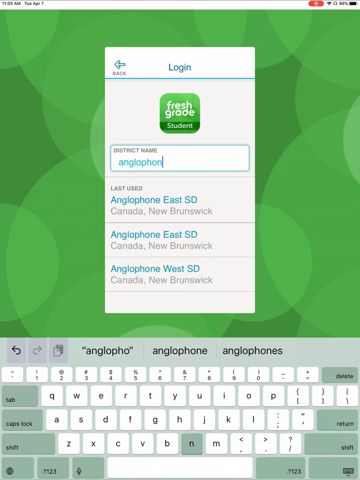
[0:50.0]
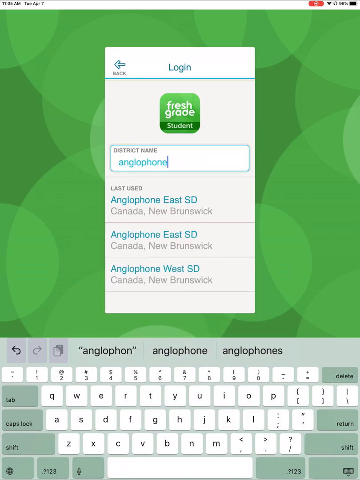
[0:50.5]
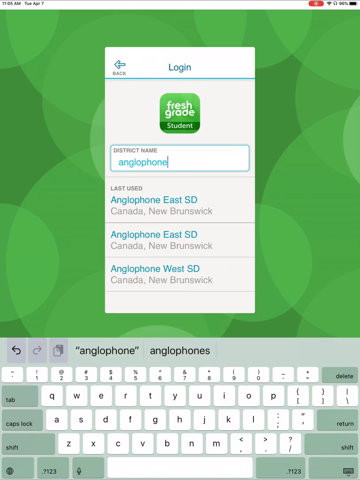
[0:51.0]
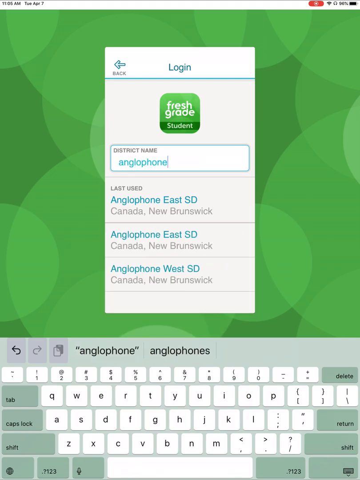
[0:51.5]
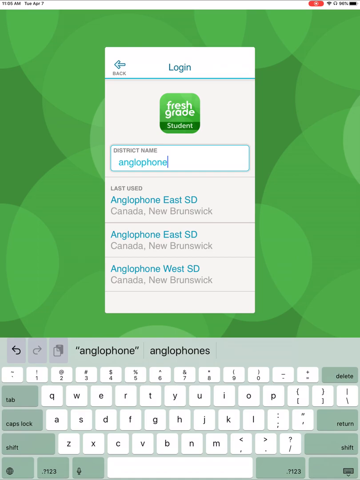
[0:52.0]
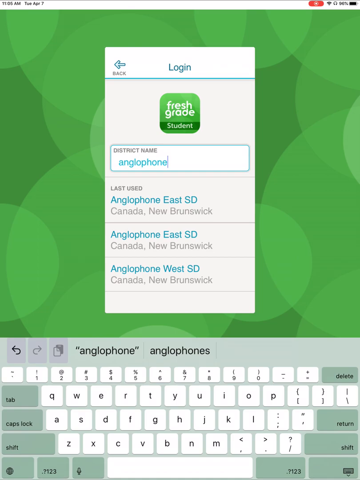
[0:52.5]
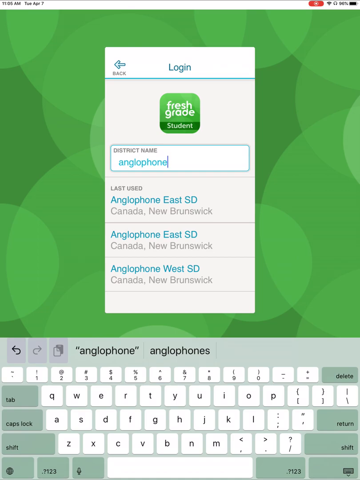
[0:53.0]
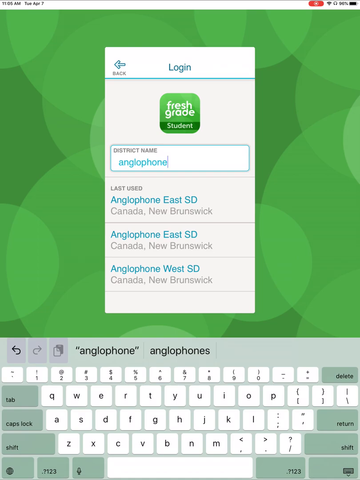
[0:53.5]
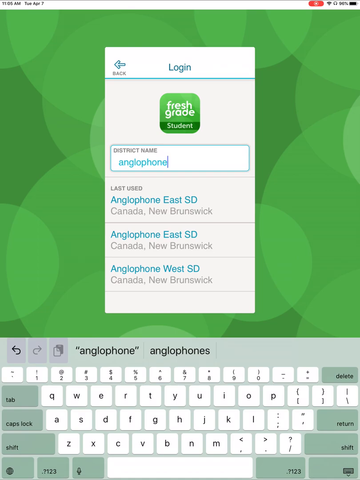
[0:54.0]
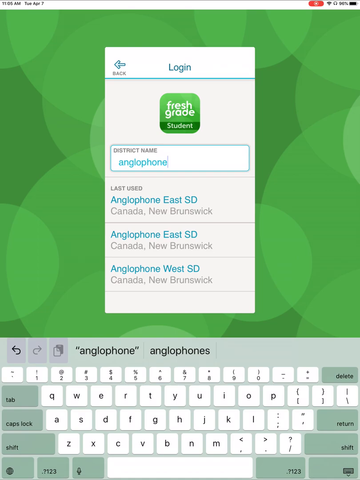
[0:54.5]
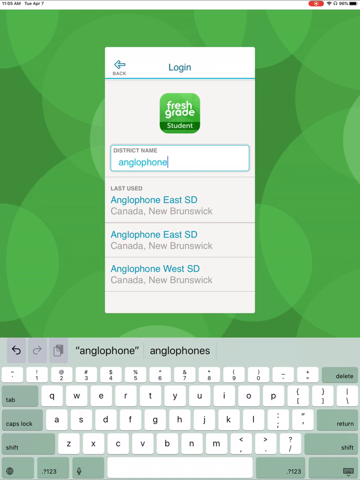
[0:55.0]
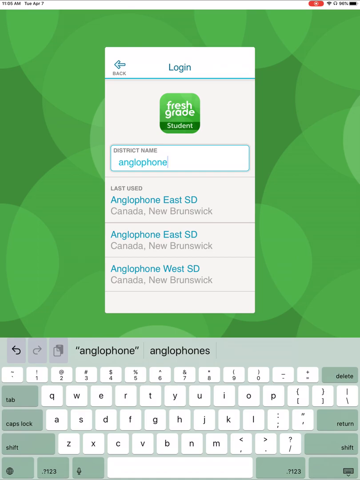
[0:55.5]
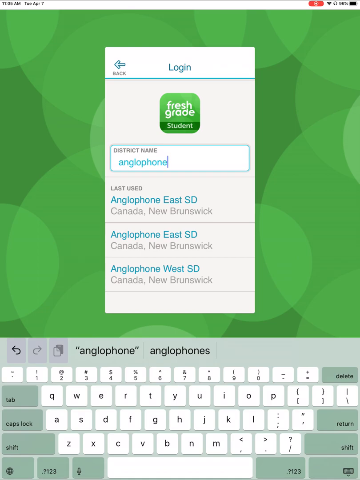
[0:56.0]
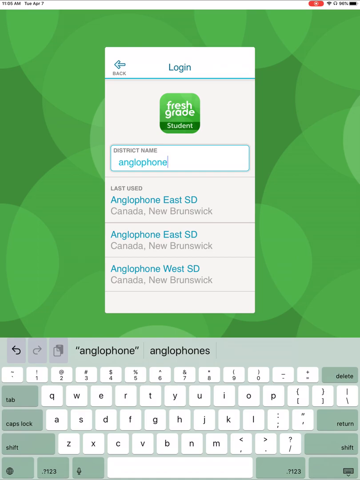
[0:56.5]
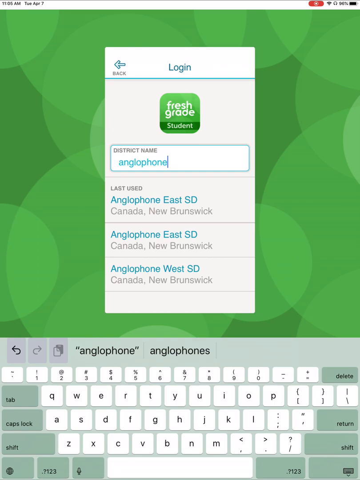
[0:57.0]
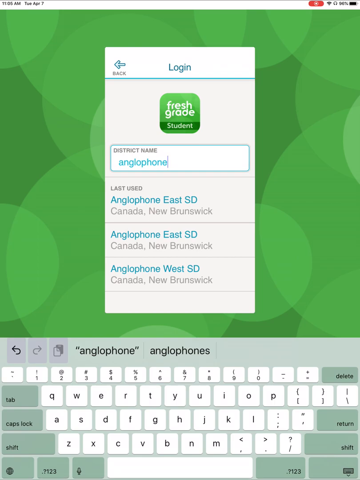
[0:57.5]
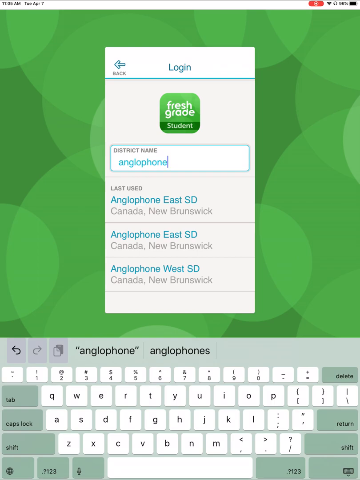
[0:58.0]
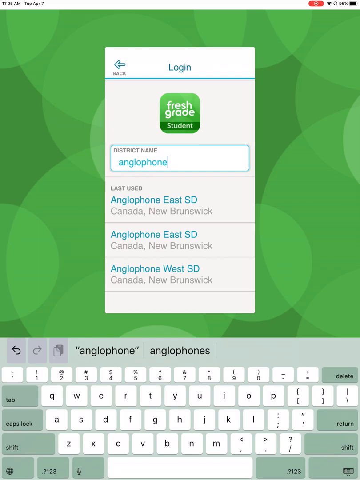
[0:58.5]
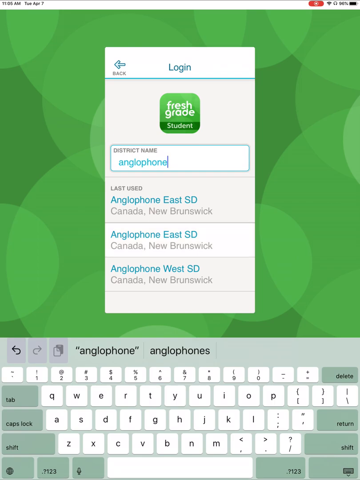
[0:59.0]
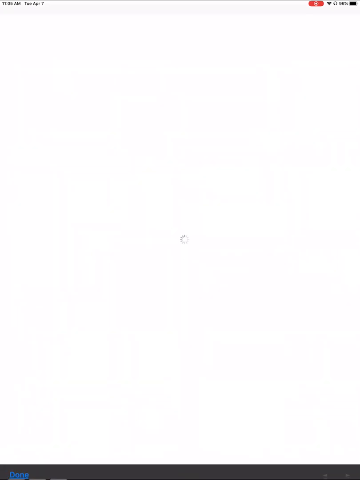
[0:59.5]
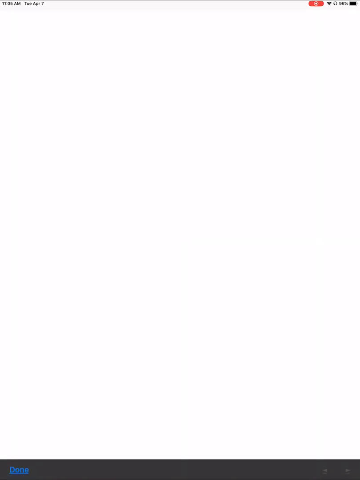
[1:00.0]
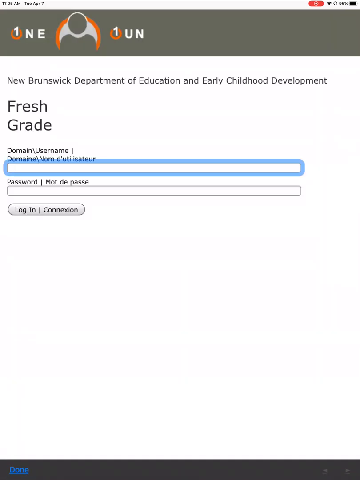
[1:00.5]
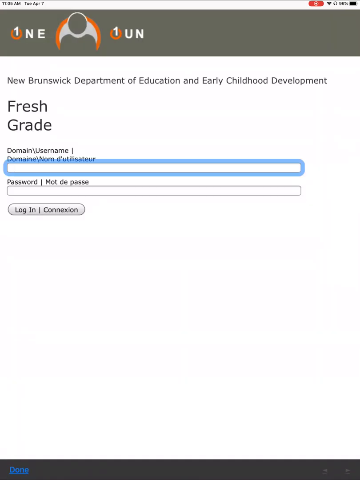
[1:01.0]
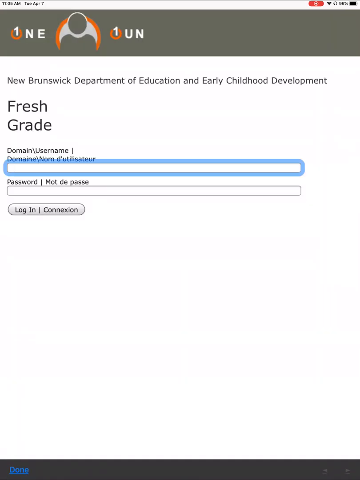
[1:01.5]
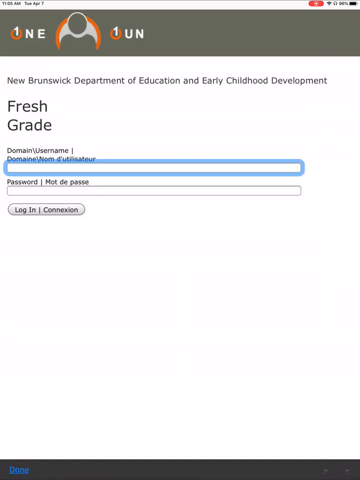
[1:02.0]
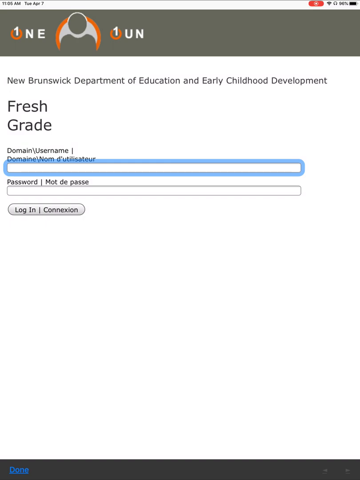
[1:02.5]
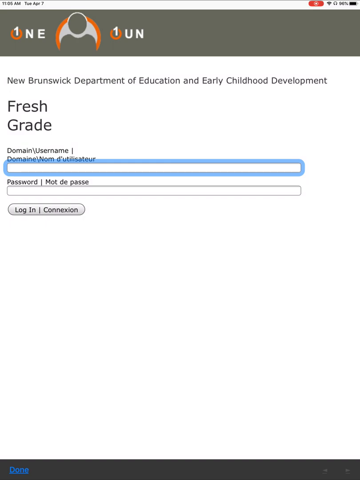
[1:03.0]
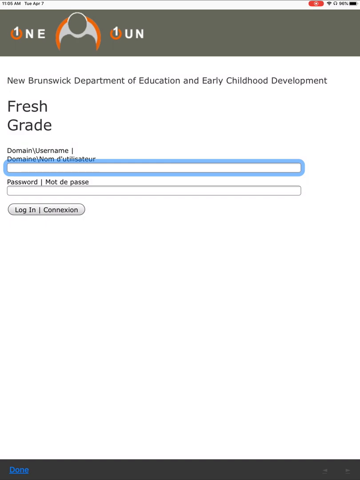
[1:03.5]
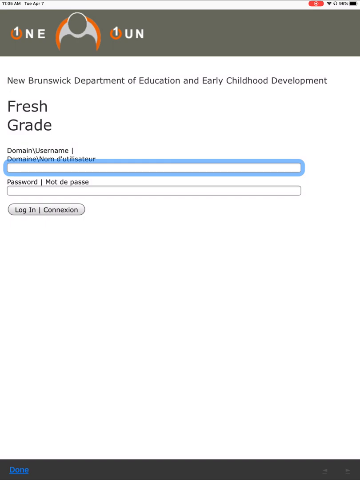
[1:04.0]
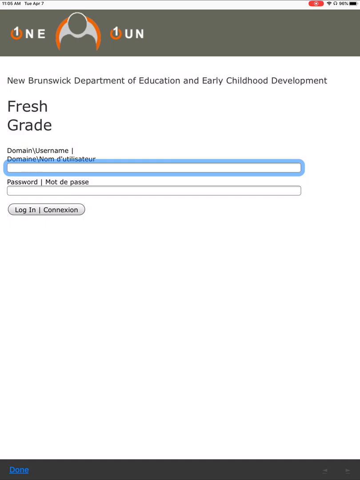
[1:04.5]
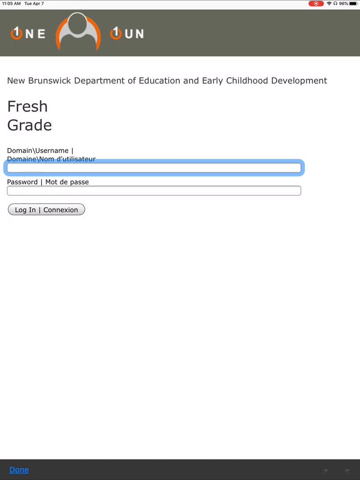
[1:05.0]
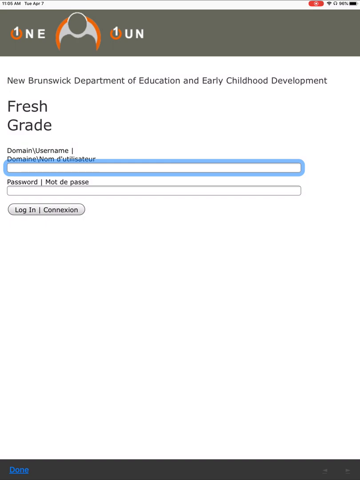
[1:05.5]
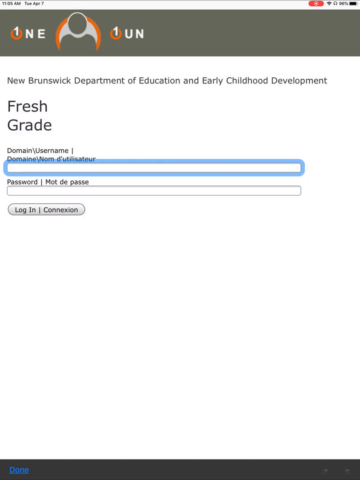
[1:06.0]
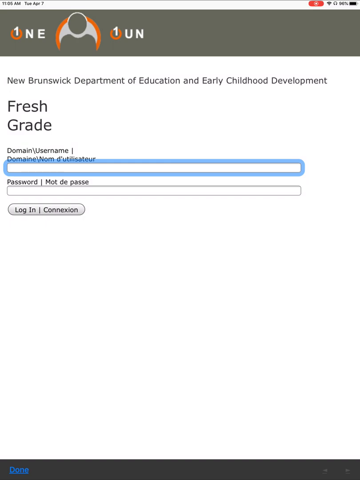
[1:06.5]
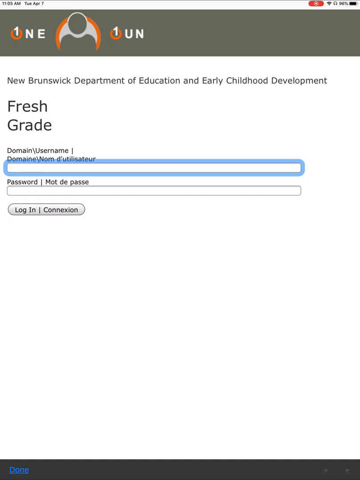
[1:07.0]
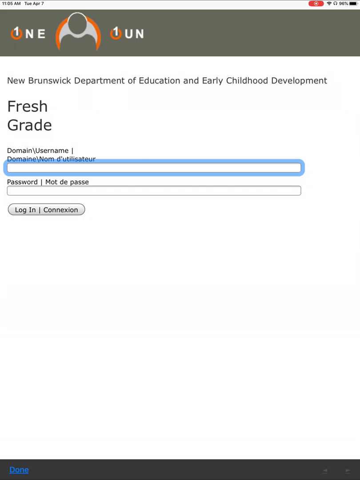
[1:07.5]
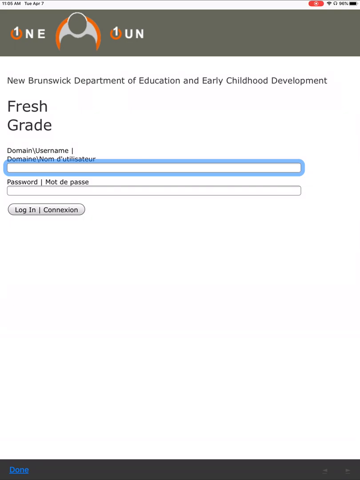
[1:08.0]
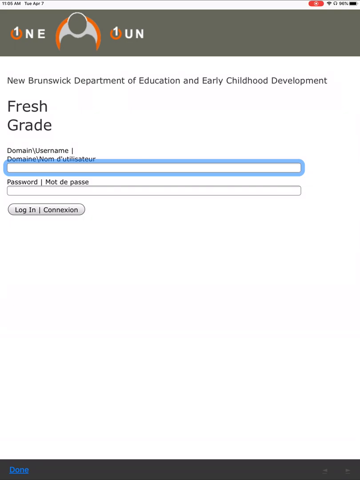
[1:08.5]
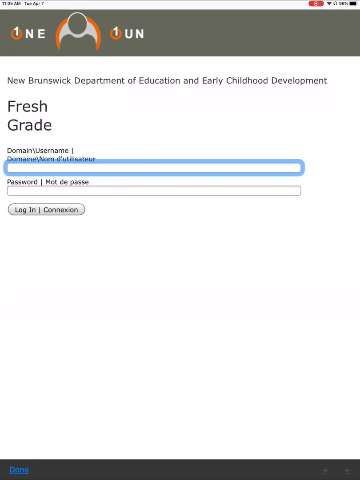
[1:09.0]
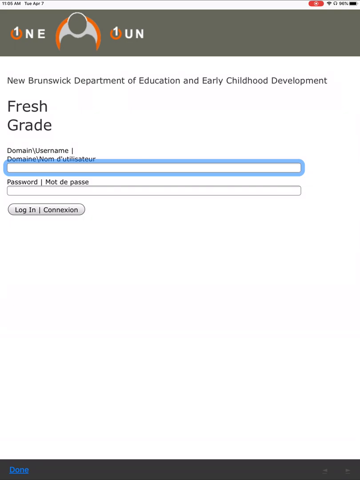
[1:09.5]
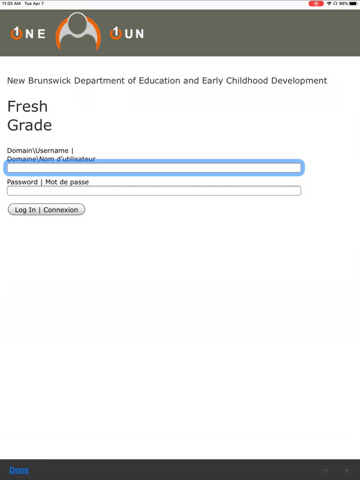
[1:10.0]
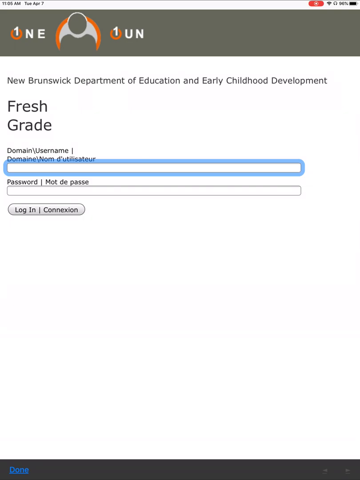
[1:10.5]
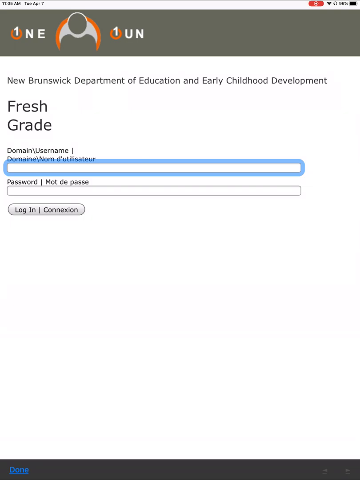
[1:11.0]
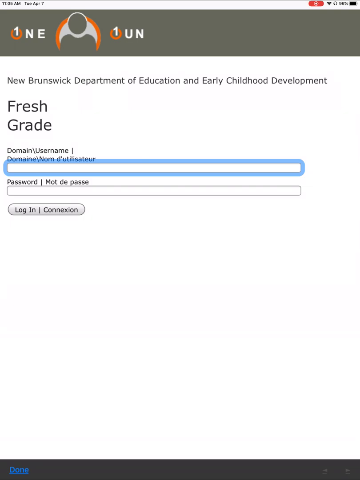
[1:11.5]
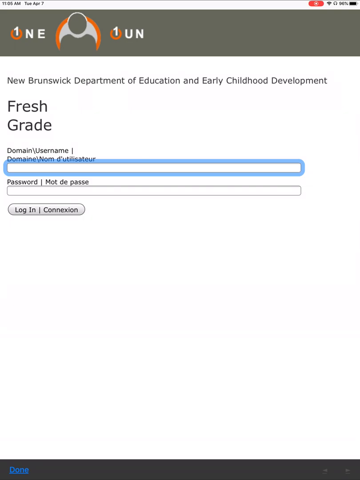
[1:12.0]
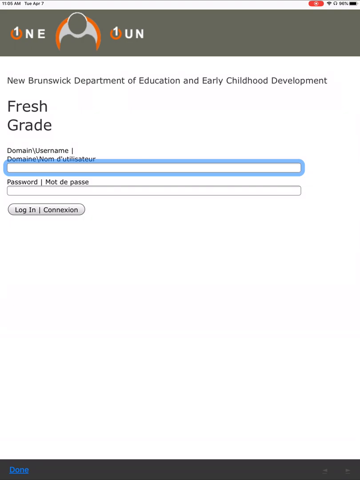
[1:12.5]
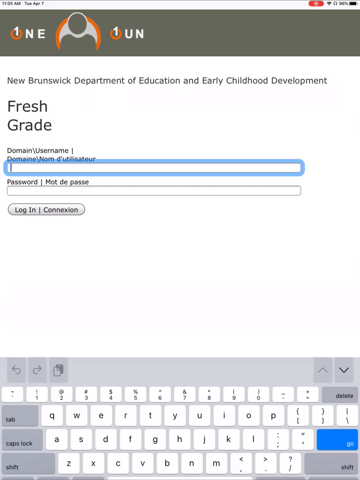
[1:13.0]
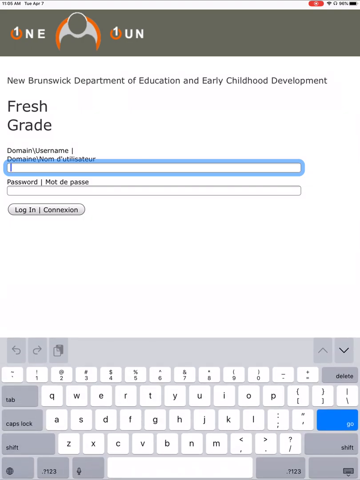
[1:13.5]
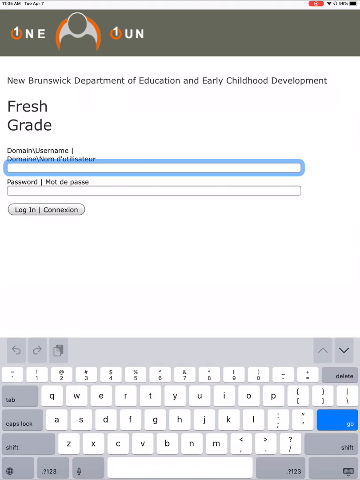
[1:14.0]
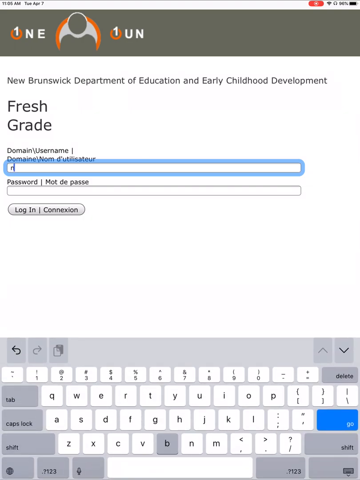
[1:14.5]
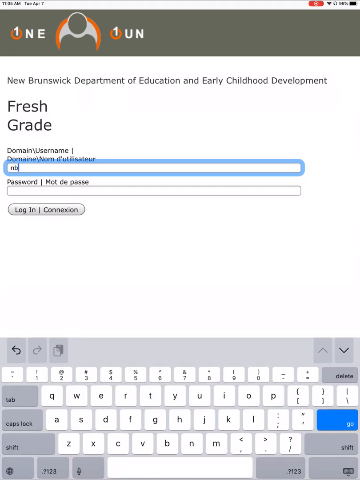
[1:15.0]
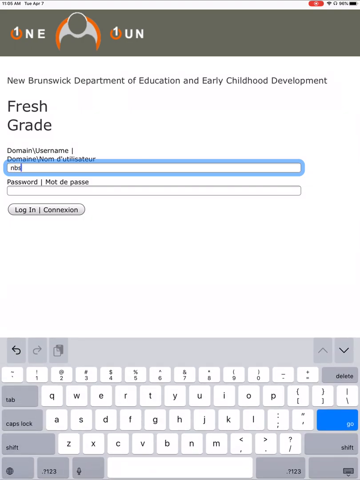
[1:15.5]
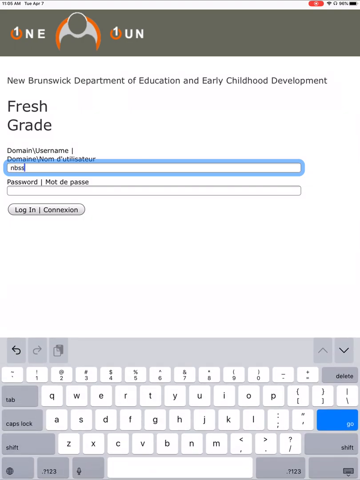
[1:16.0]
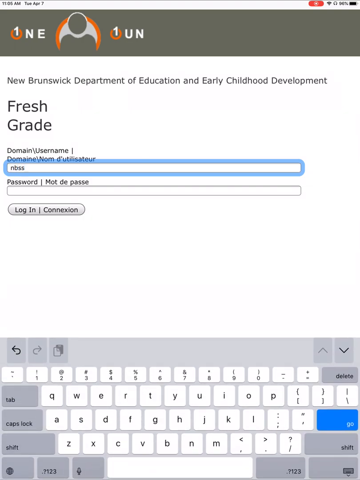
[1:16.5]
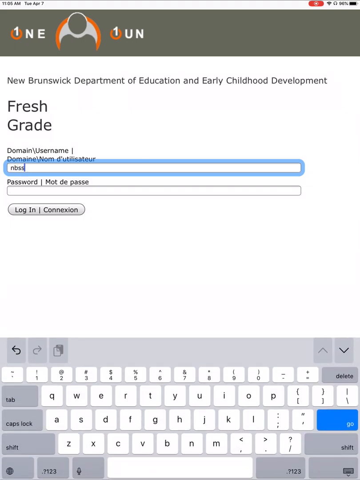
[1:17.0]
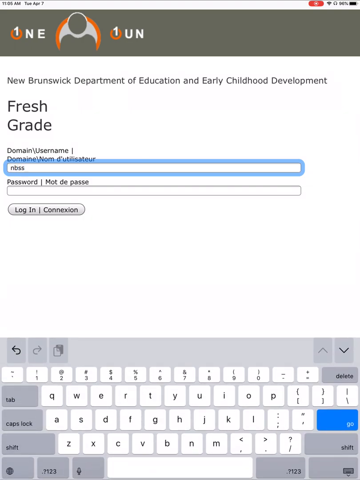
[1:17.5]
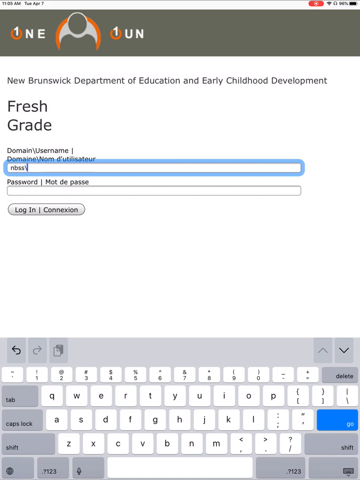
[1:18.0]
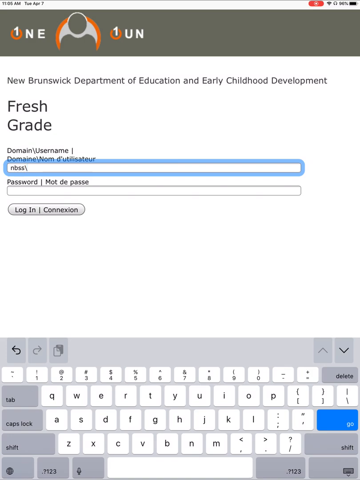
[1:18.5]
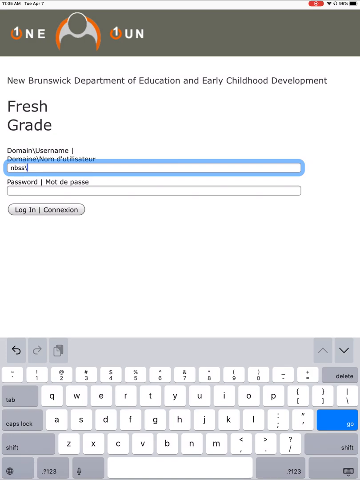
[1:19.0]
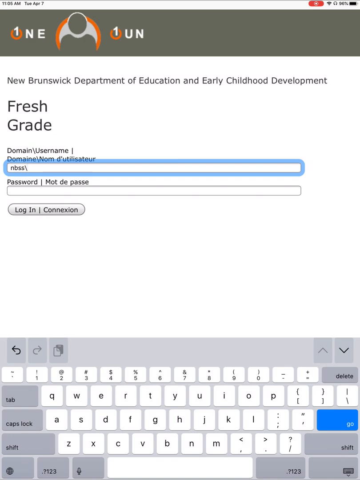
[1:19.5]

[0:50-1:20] The page for the district login information is still shown. After the user types in Anglophone, a few seconds pass before a pop-up comes up on the screen from the bottom to the top. It is a white page showing a FreshGrade login for the New Brunswick Department of Education and Early Childhood Development, with fields for domain/username and password. The page is very simple looking, with two white boxes, and a blue outline is currently around the domain/username area. A simple all-gray login button is below the two boxes. A gray-brownish bar is at the very top with a logo featuring a simplistic person symbol with an orange outline around the person. The user starts to type in the domain in the top box.